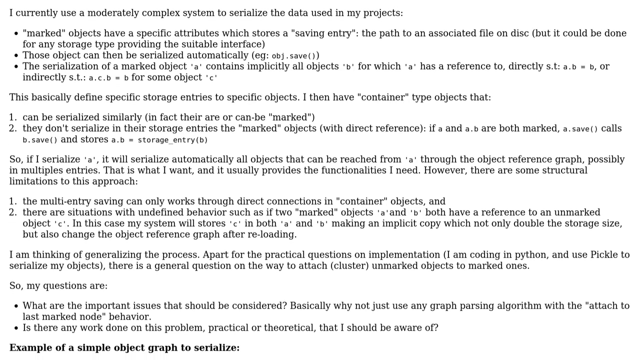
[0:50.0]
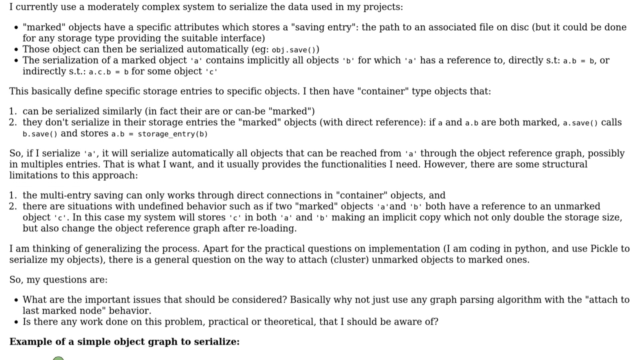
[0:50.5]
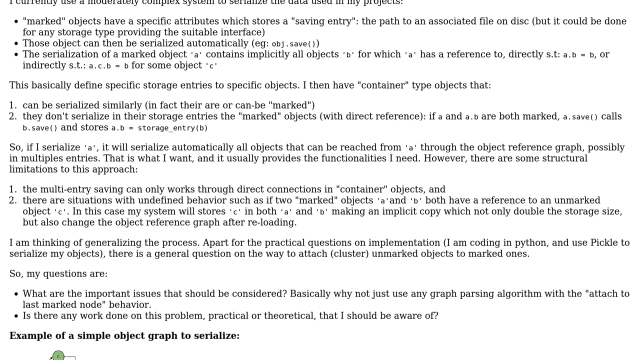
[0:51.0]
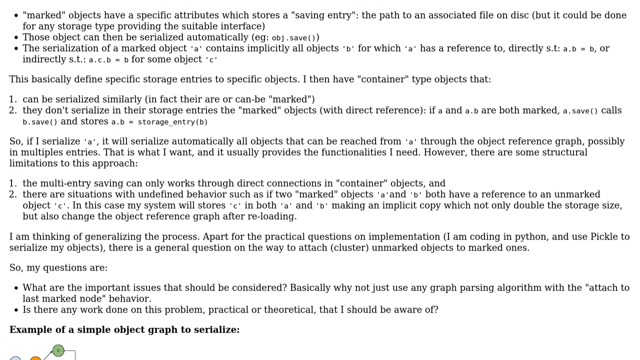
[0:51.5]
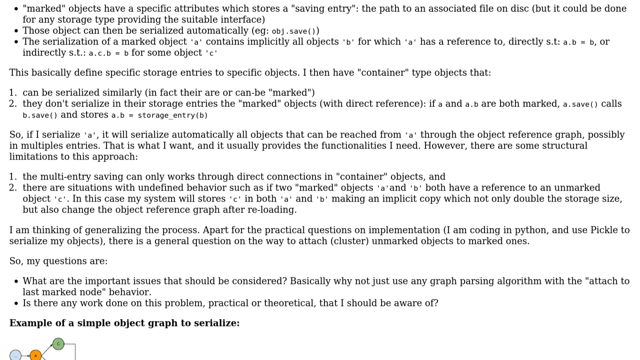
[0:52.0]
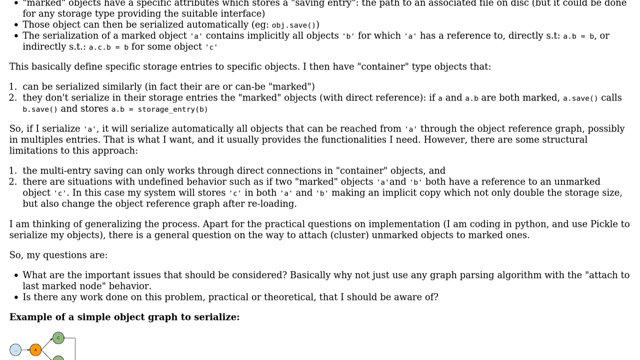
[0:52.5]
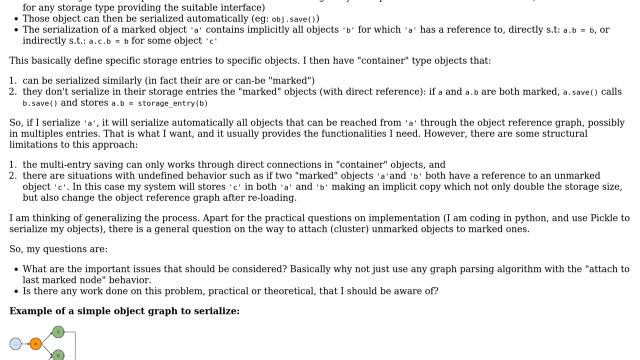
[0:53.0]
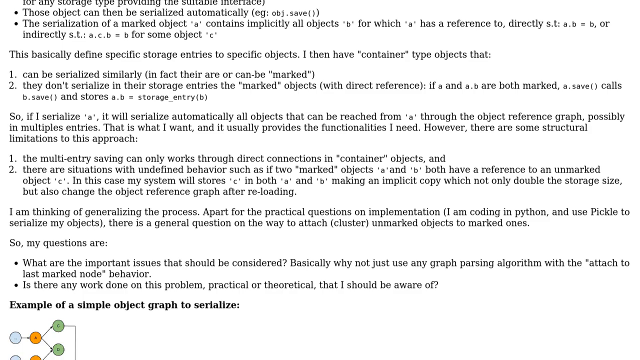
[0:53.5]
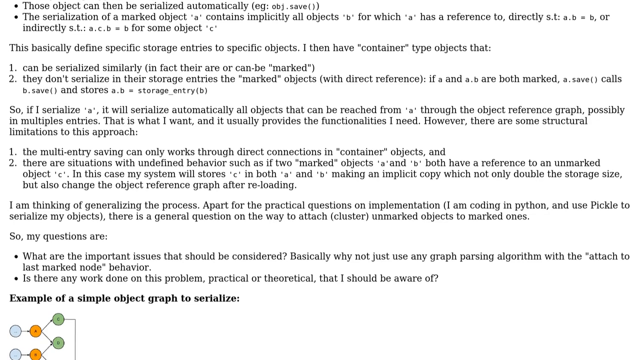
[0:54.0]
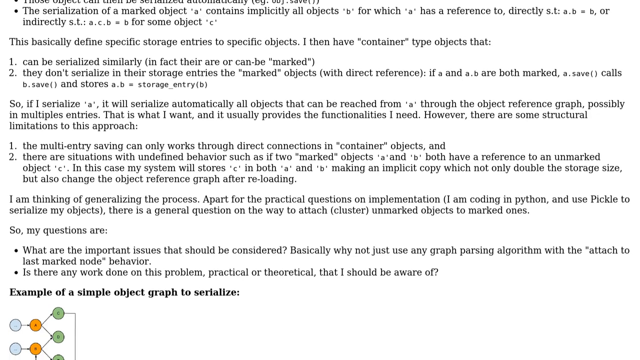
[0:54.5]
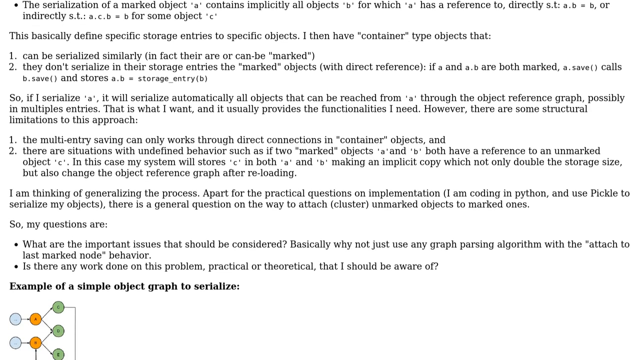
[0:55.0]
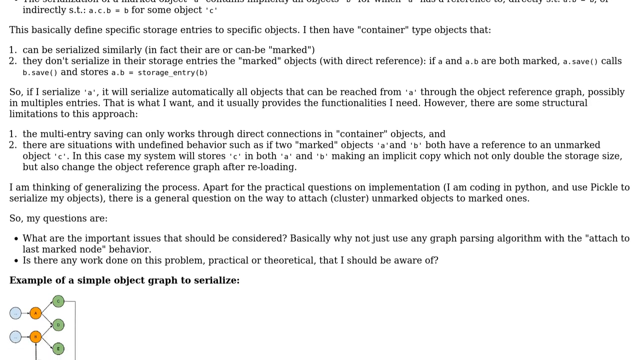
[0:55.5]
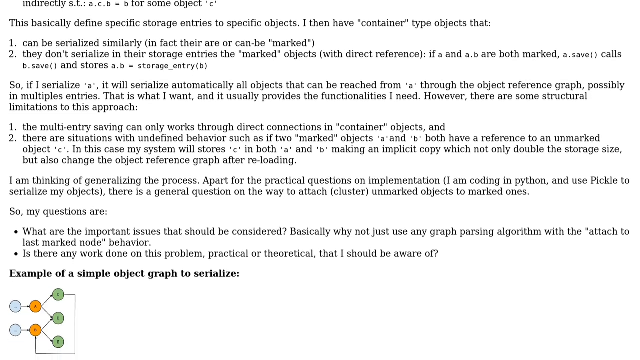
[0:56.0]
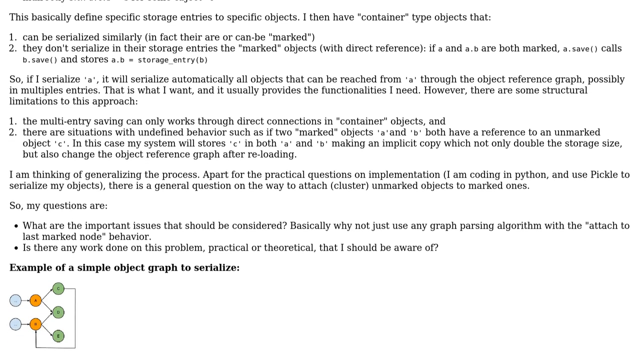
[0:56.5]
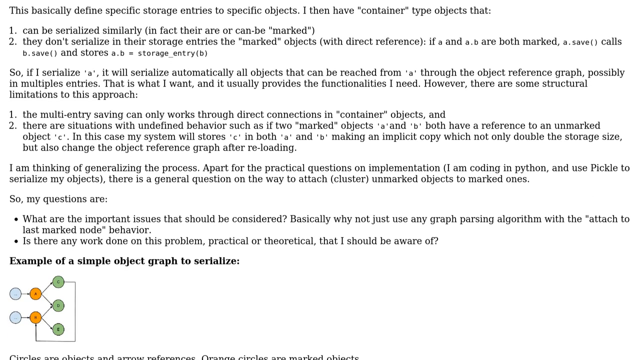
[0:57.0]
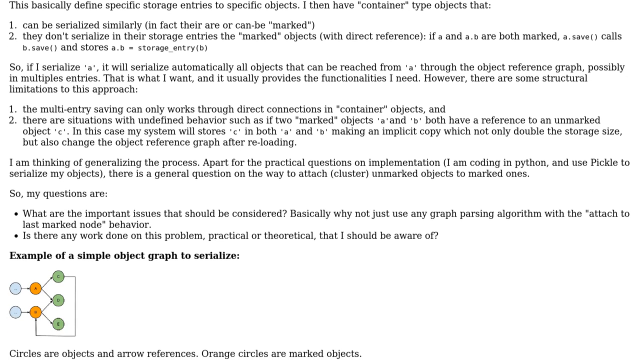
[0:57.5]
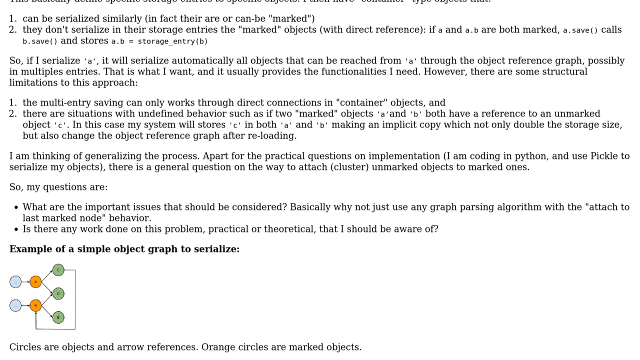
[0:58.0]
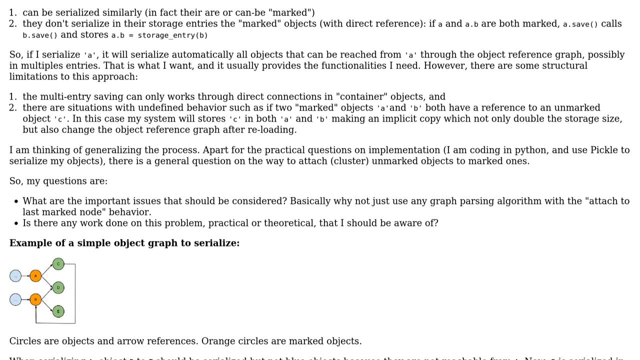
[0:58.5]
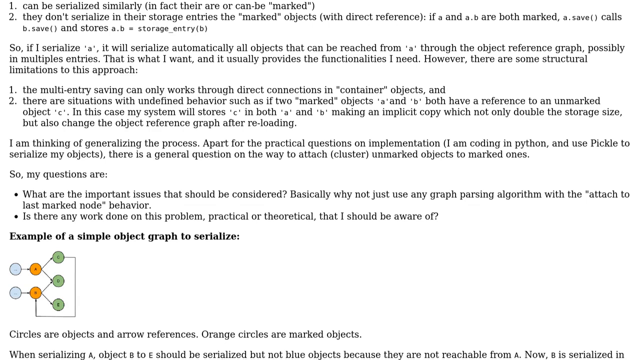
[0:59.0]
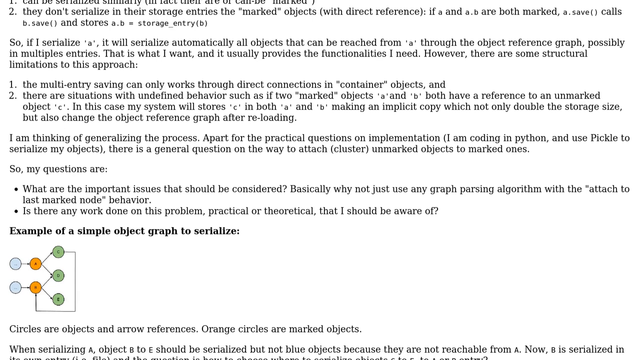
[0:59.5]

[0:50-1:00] The text of the question and its solutions scrolls up from the bottom of the page. Some parts are numbered, with two places marked number 1 and number 2. A bolded line reads "example of a simple object graph to serialize," followed by a picture of a graph with white, orange and green circles that have lines coming from them. At the bottom it says "circles are objects."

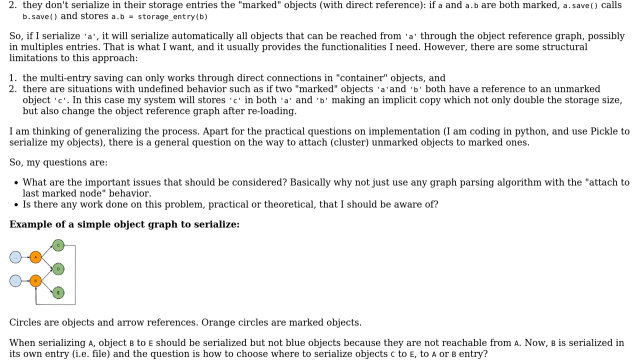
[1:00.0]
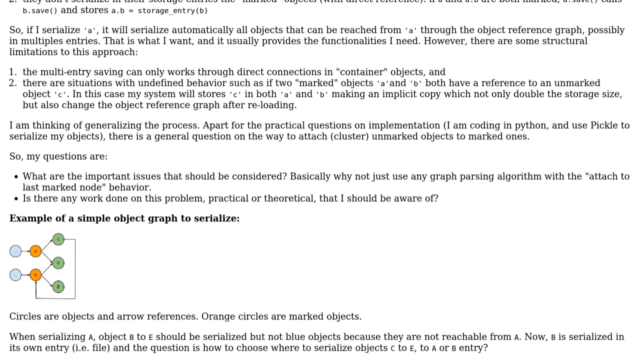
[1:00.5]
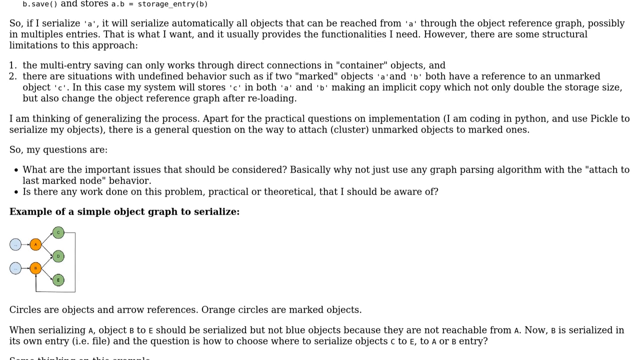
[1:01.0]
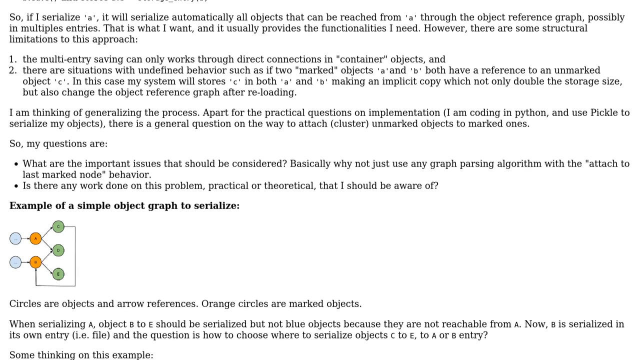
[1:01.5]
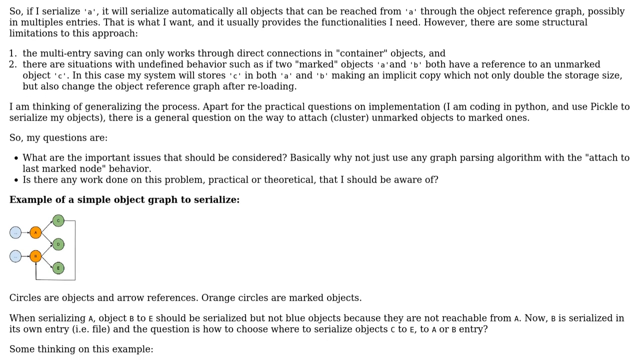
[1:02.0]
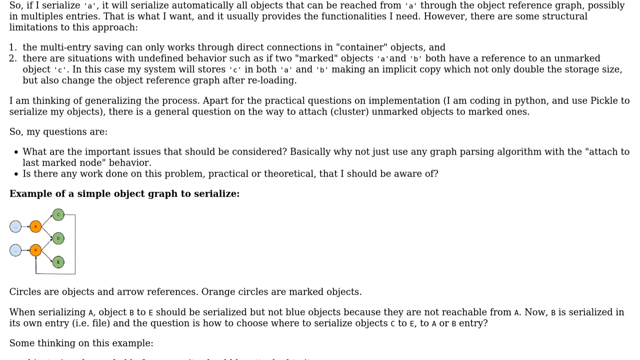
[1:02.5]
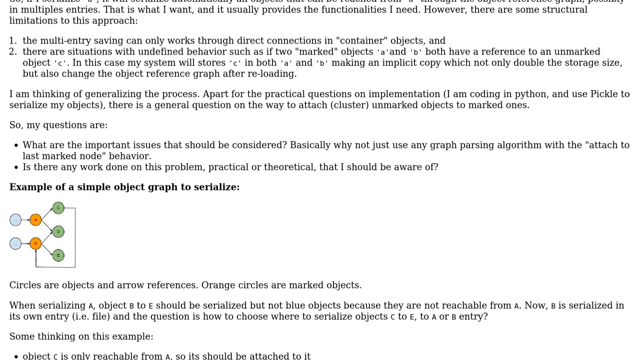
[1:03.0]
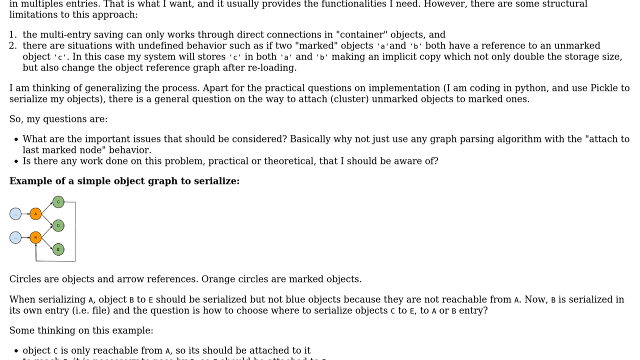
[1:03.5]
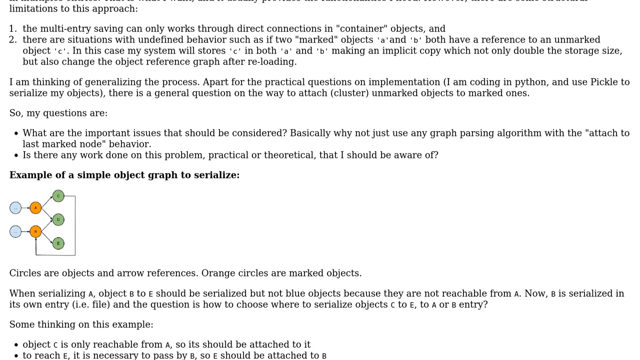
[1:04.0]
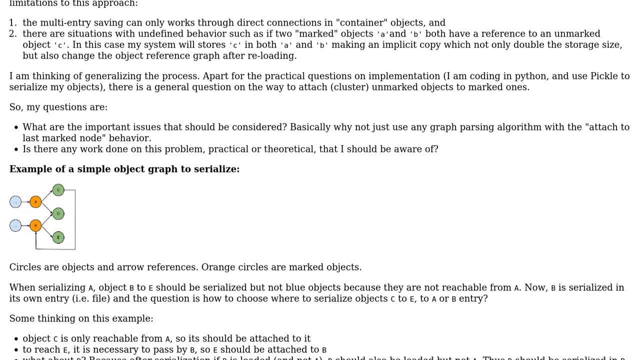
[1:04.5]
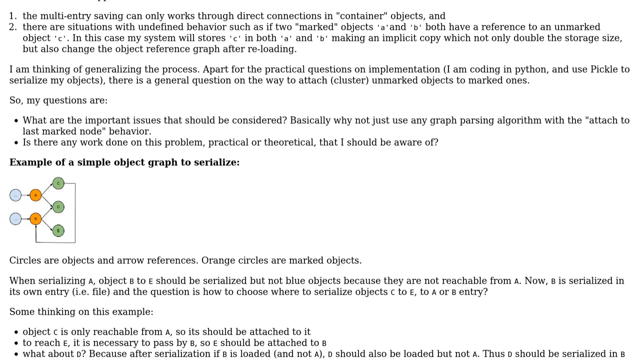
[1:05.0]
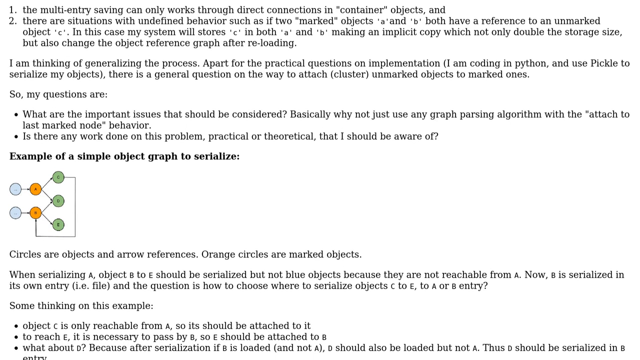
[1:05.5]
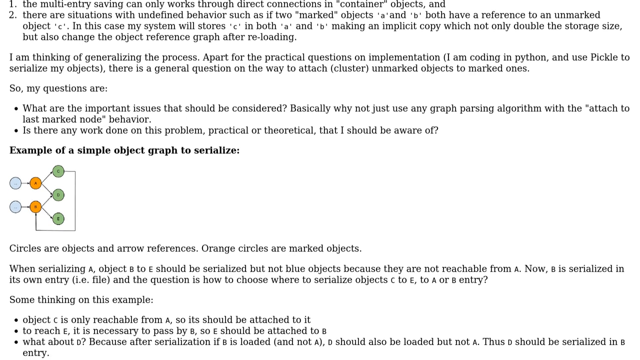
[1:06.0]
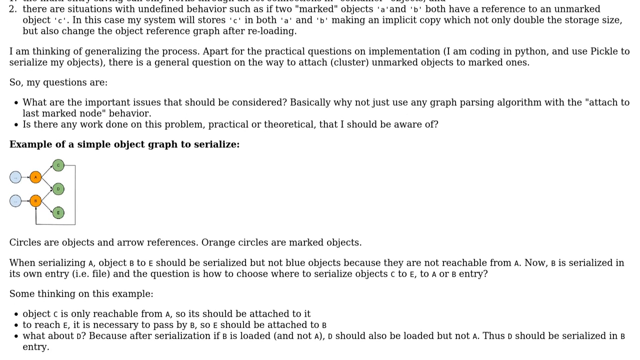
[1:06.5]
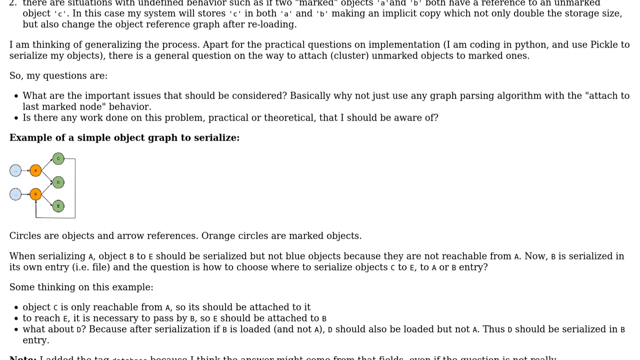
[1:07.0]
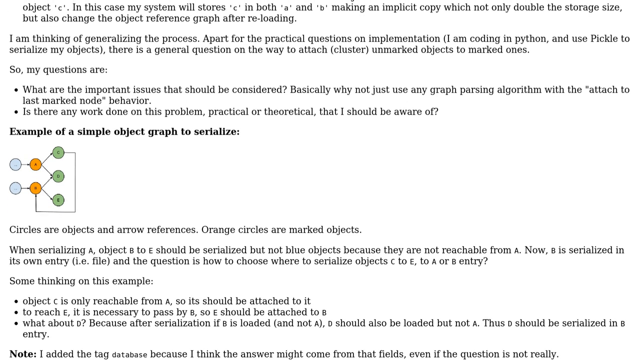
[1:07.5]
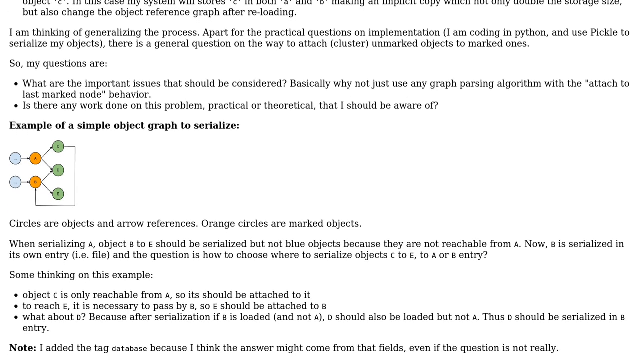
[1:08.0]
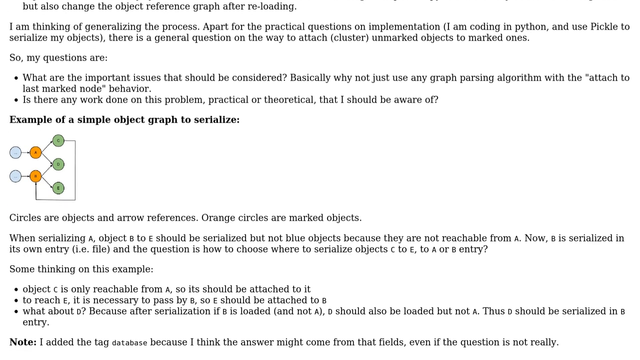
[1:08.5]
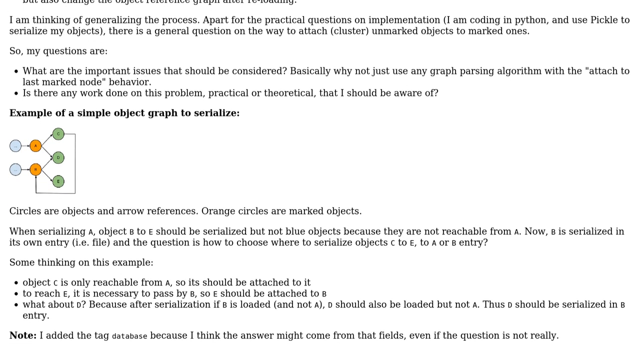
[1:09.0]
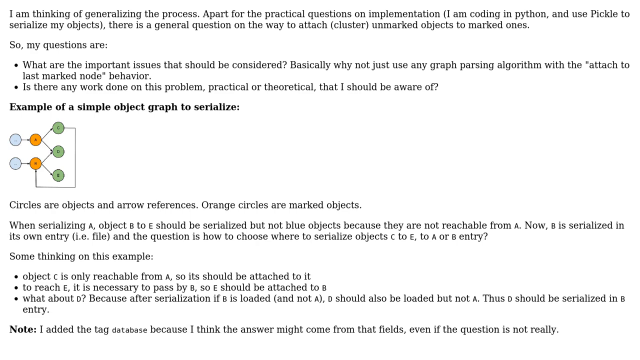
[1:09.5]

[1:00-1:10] The text of the solution continues scrolling very slowly from bottom to top on the same screen. Notes at the very bottom say "I added the tag database because I think the answer might come from that field." Otherwise the words just keep scrolling up the screen.